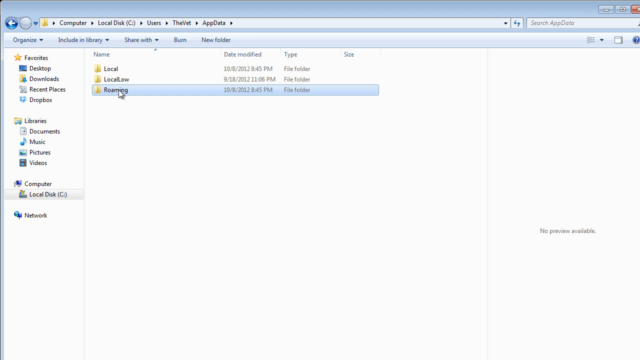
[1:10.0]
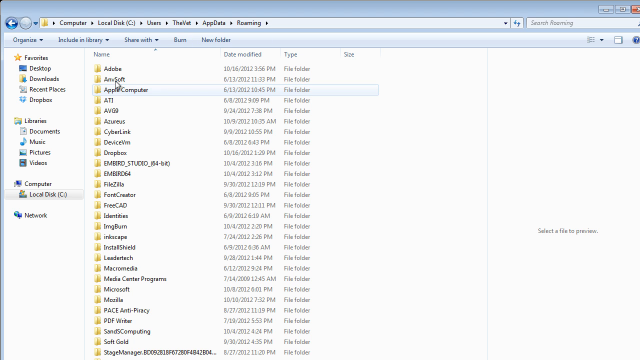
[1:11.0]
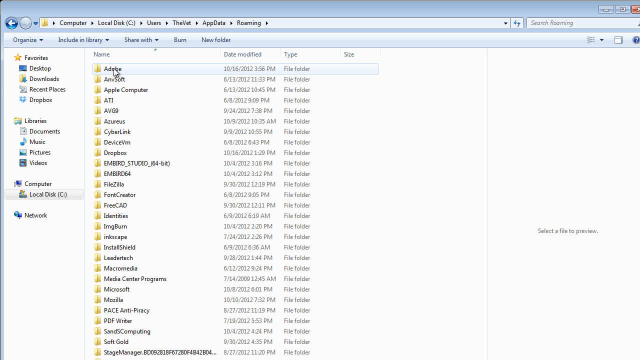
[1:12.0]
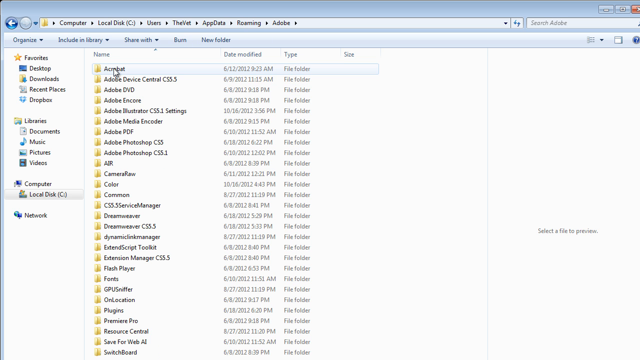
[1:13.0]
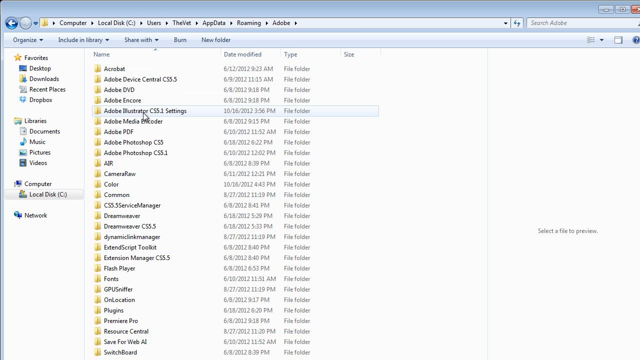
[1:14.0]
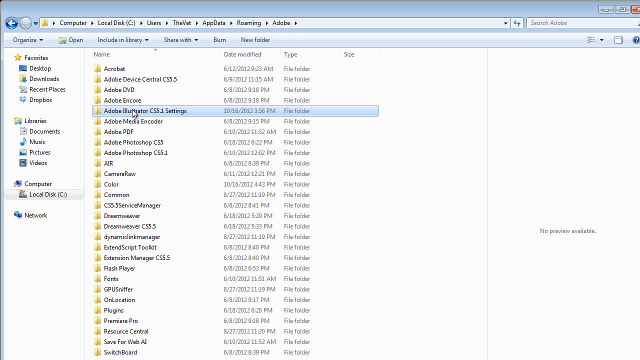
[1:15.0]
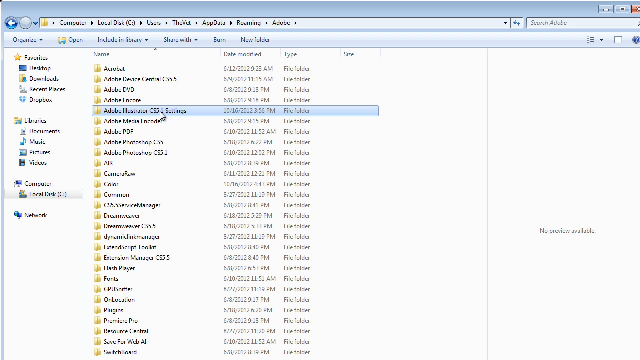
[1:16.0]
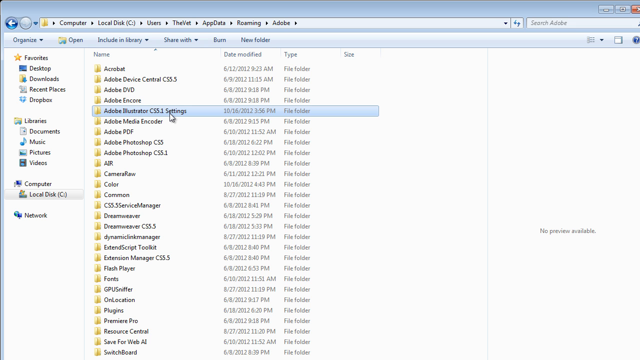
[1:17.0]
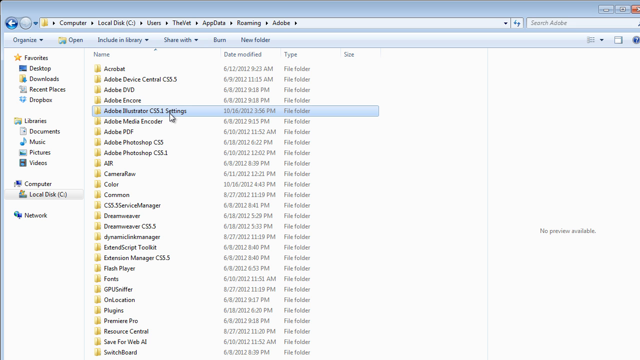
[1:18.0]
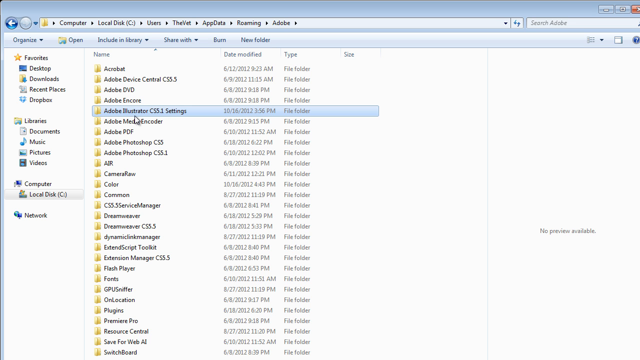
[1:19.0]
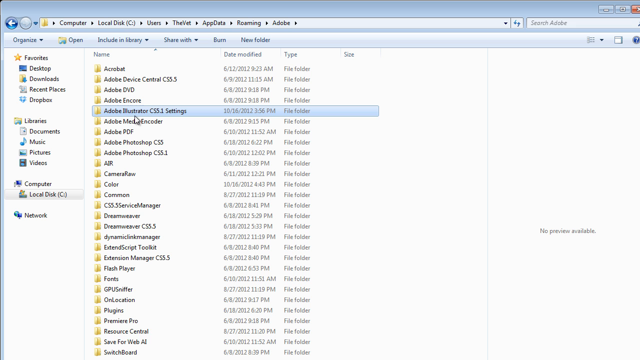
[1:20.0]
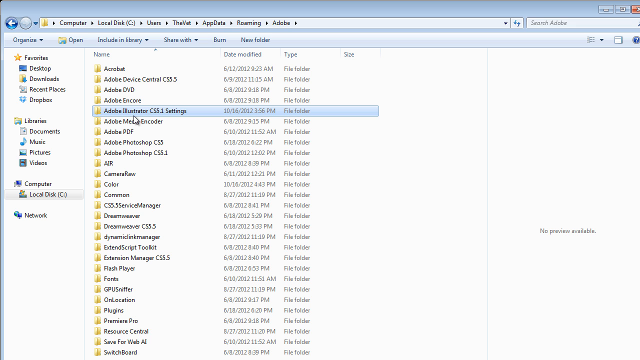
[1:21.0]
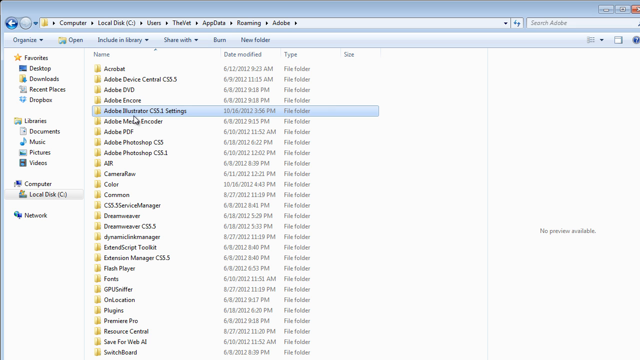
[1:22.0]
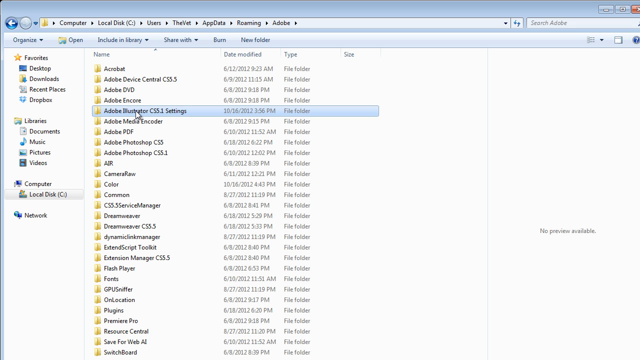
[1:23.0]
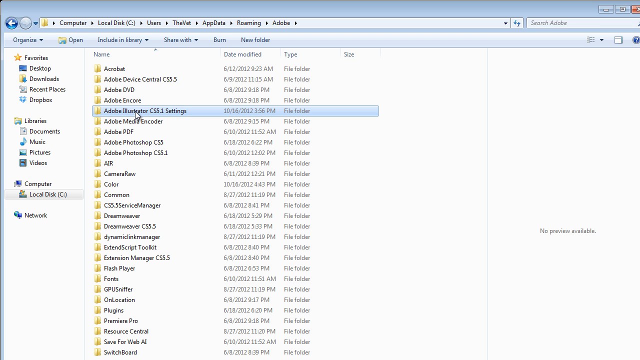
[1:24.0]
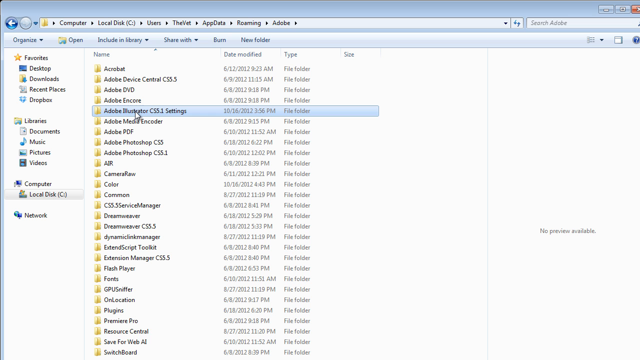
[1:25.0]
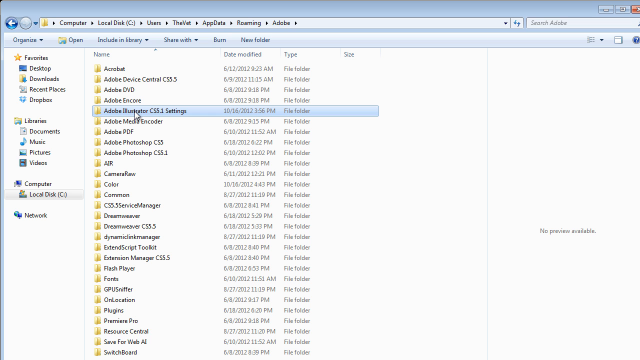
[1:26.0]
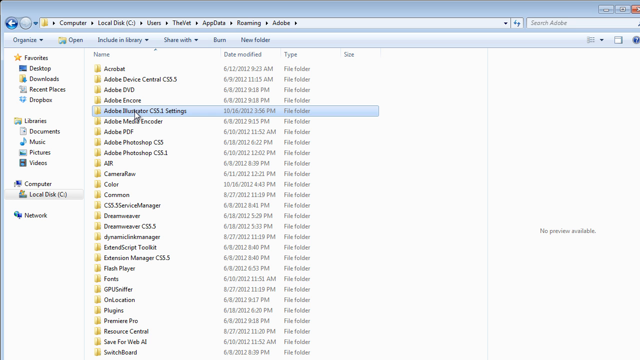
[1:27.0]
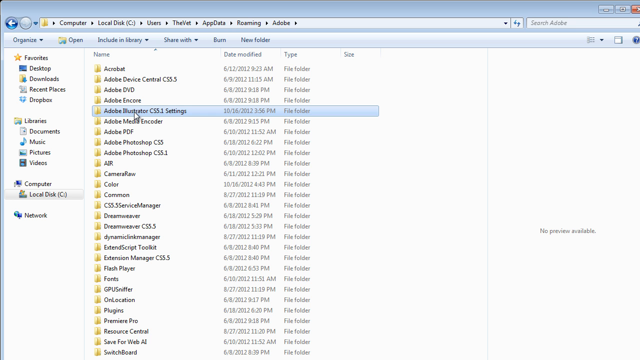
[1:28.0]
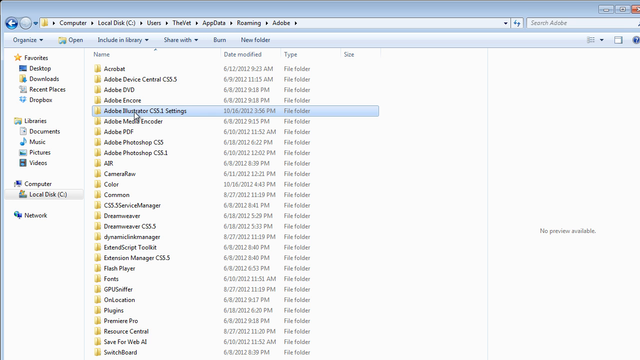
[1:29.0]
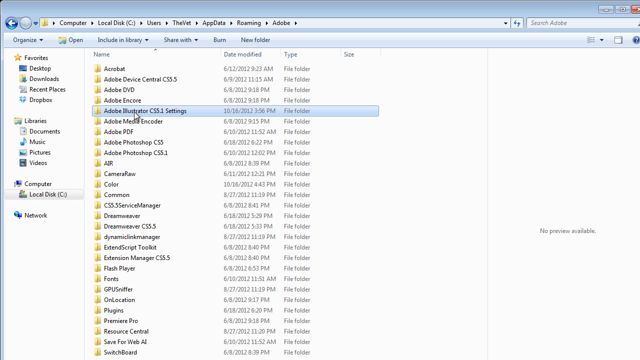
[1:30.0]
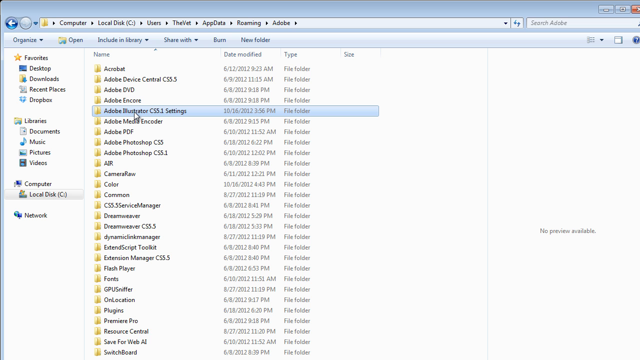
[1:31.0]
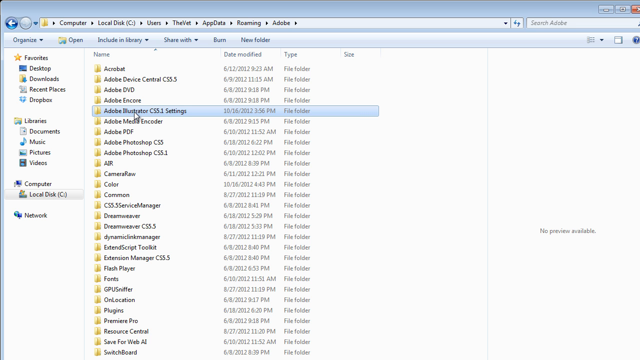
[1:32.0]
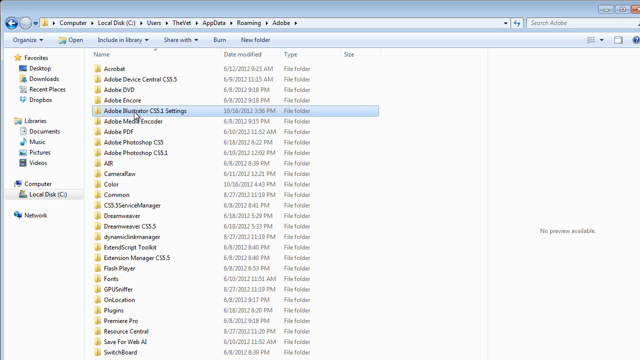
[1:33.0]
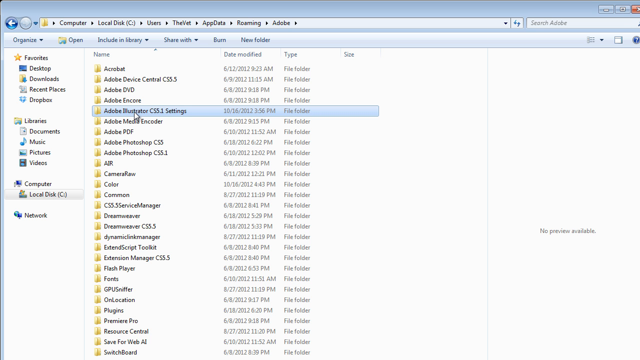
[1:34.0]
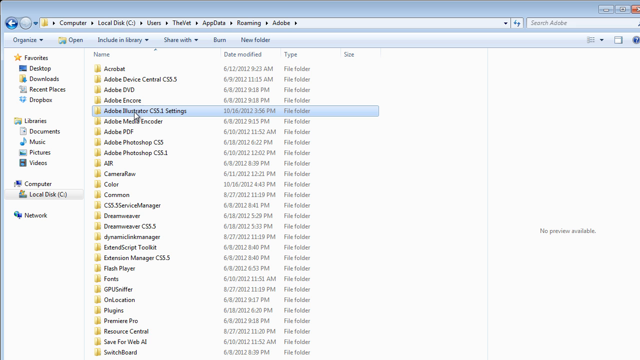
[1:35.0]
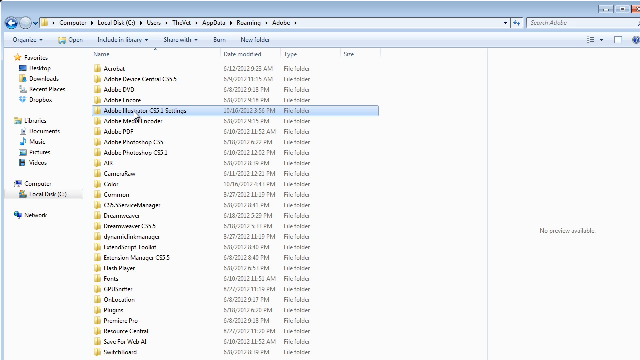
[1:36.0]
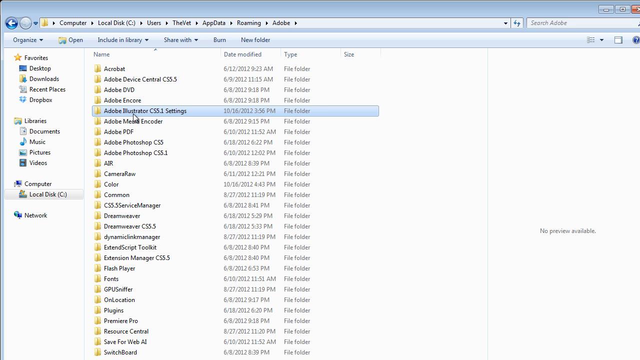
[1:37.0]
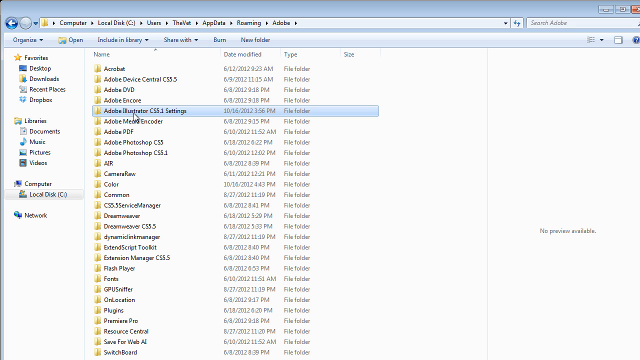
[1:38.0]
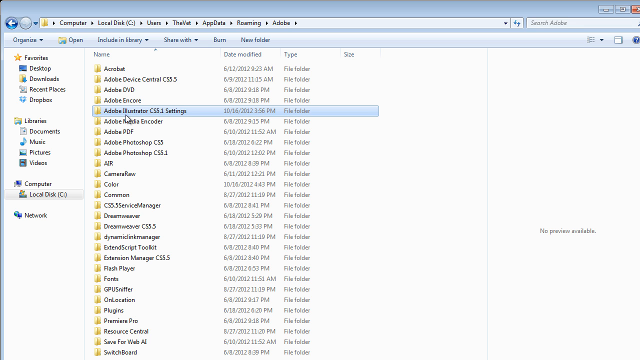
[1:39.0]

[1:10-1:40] A folder with three subfolders, Local, Location and Roaming, is shown. The user clicks on Roaming, which brings up Adobe, and goes into that. He finds an Adobe Illustrator settings folder and moves the mouse to highlight it, keeping the pointer moving around it without entering, and apparently does not open it.